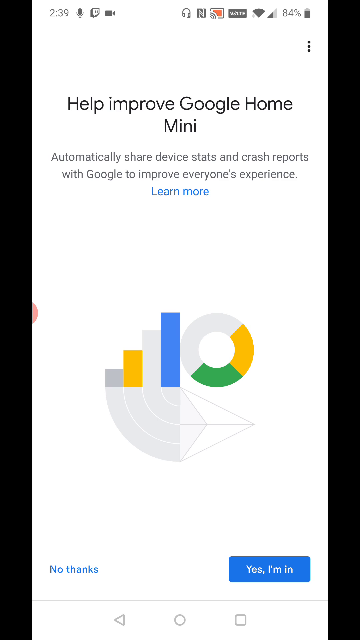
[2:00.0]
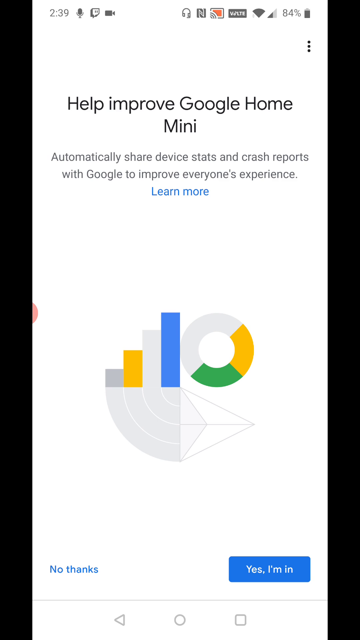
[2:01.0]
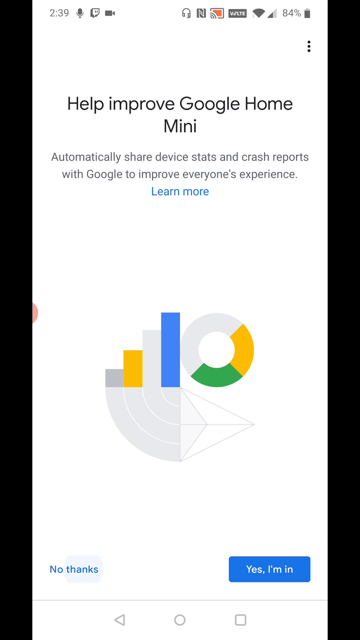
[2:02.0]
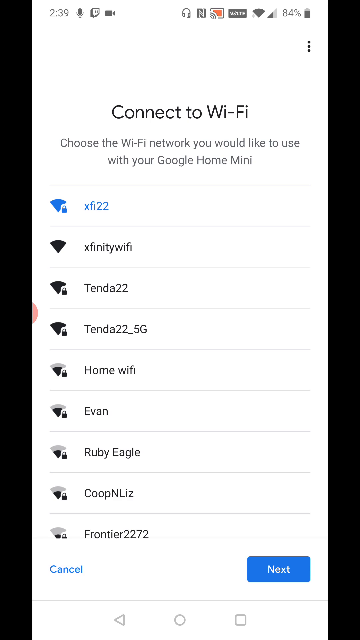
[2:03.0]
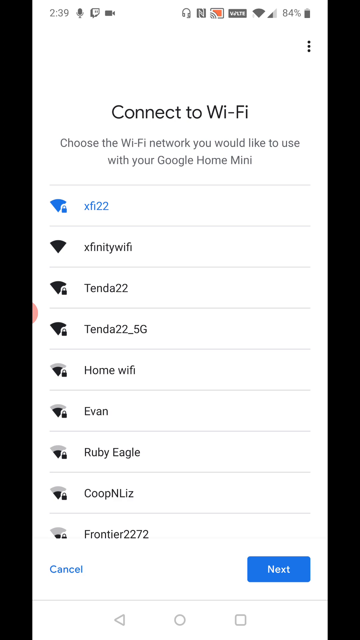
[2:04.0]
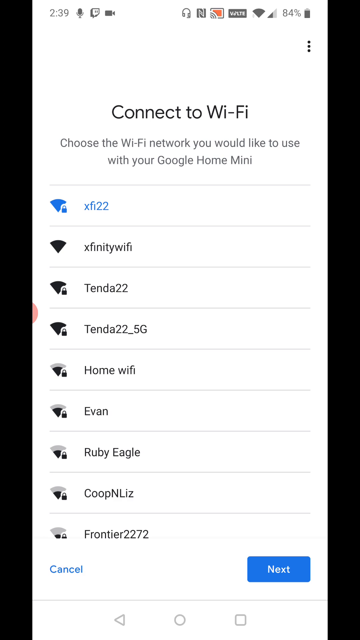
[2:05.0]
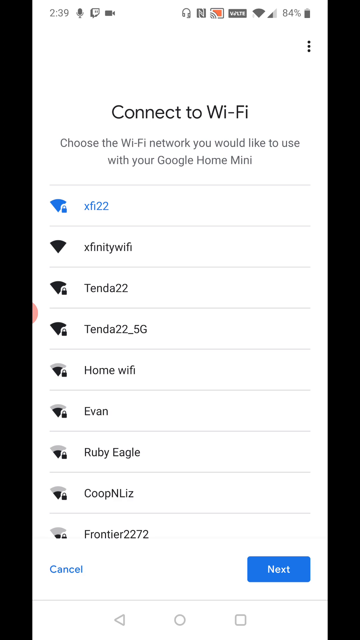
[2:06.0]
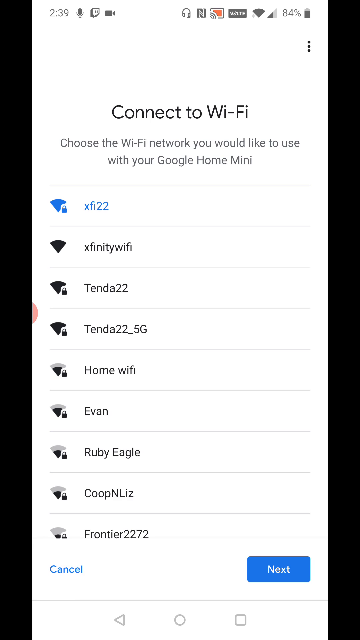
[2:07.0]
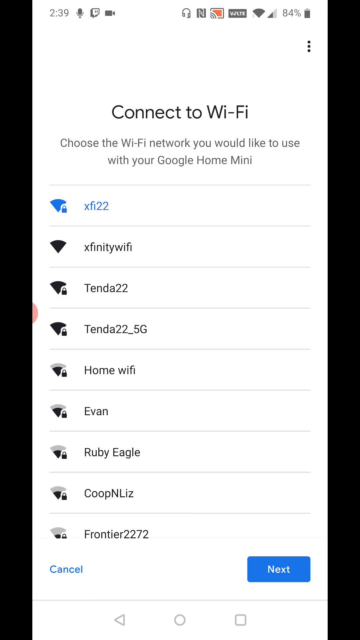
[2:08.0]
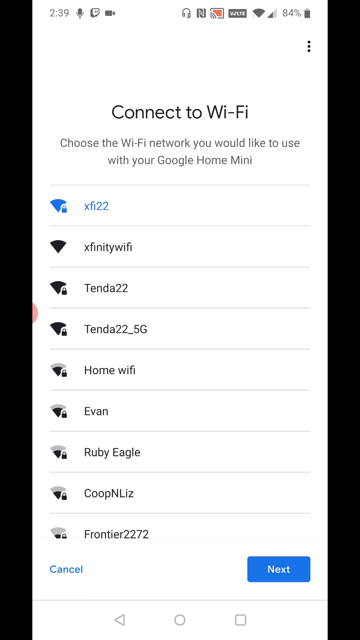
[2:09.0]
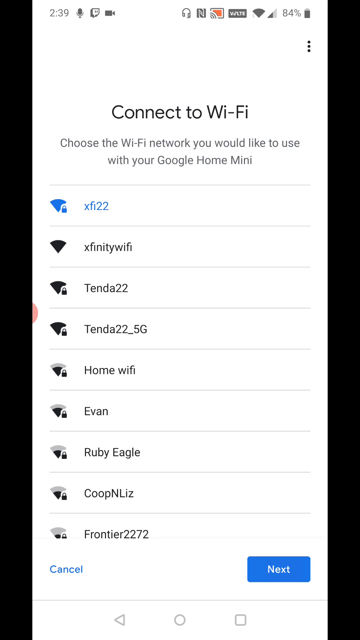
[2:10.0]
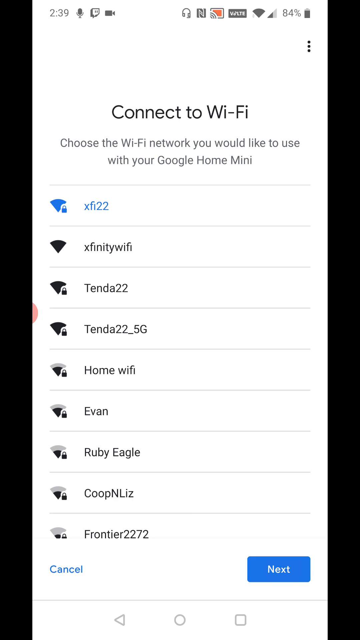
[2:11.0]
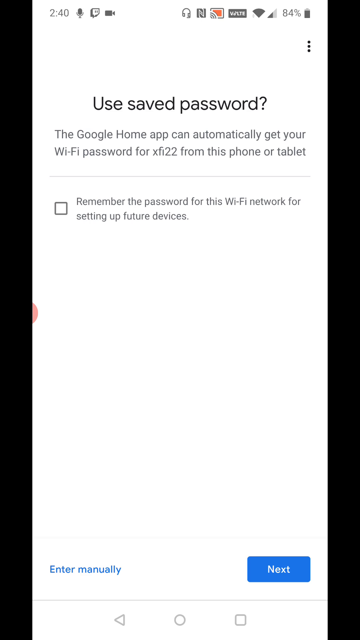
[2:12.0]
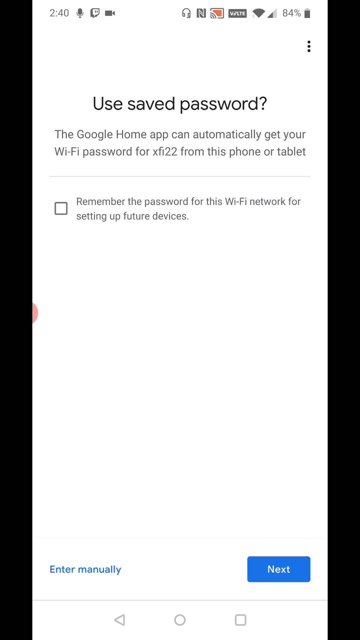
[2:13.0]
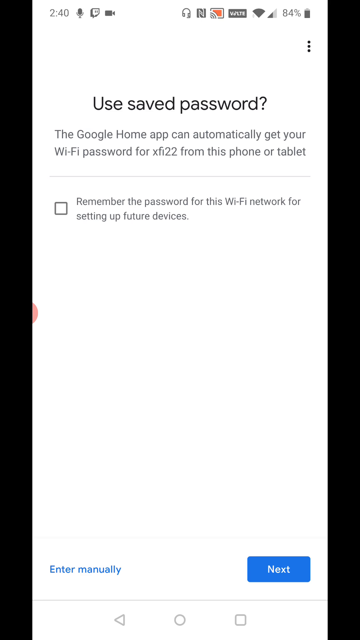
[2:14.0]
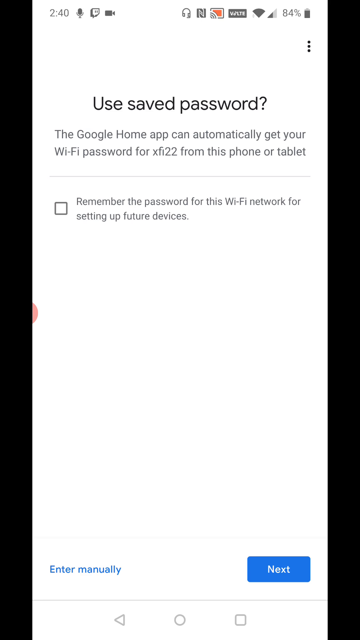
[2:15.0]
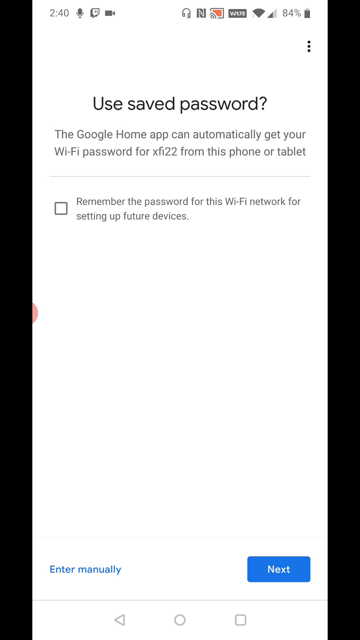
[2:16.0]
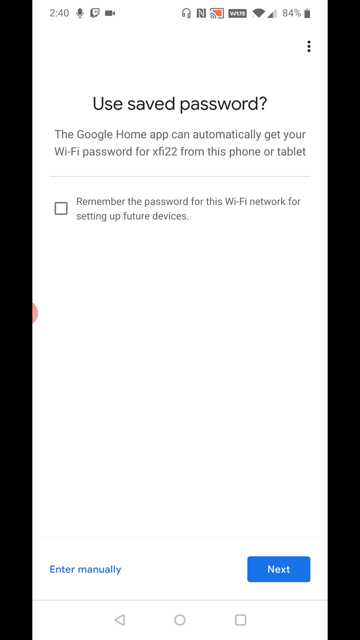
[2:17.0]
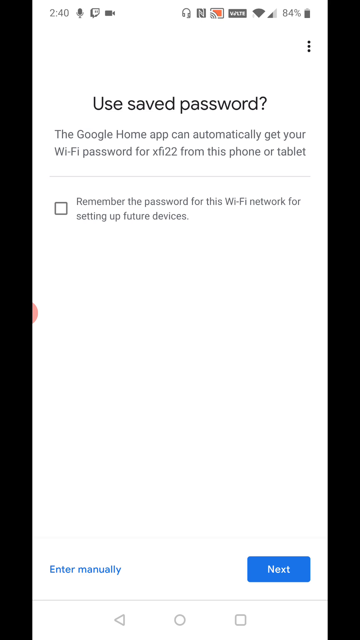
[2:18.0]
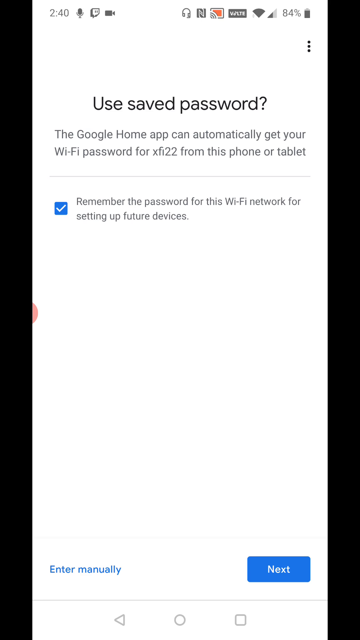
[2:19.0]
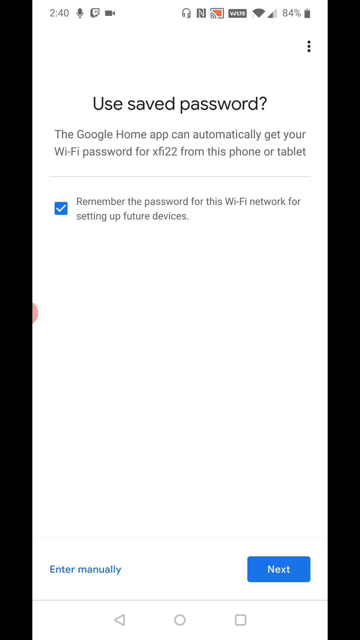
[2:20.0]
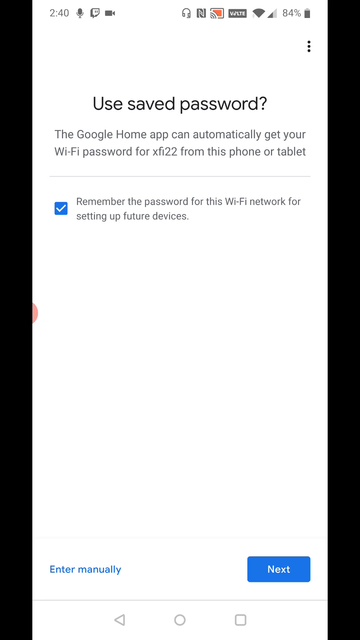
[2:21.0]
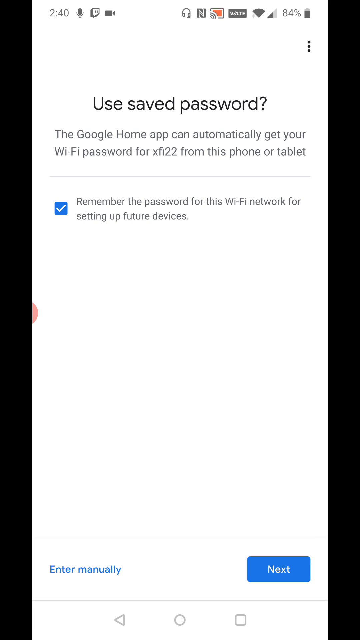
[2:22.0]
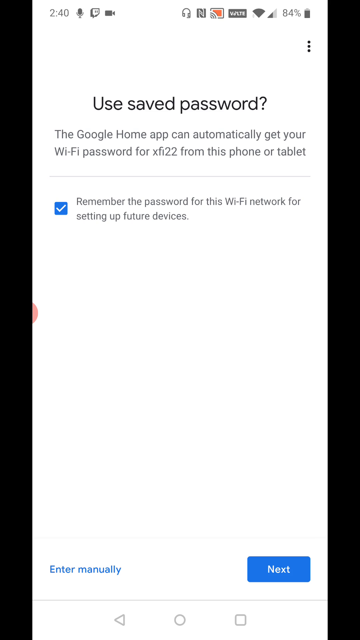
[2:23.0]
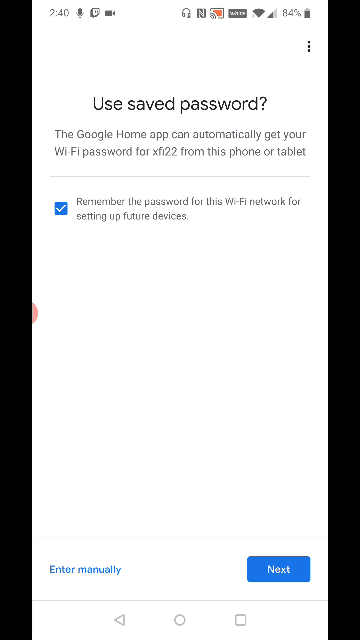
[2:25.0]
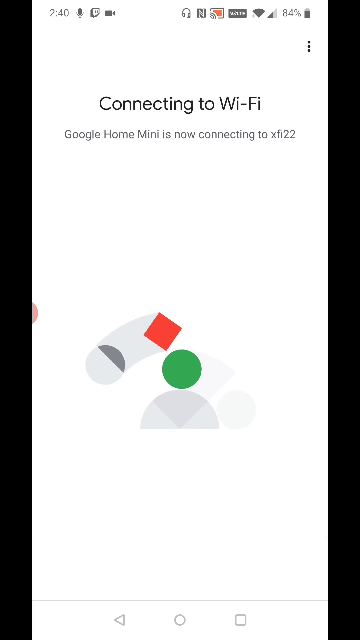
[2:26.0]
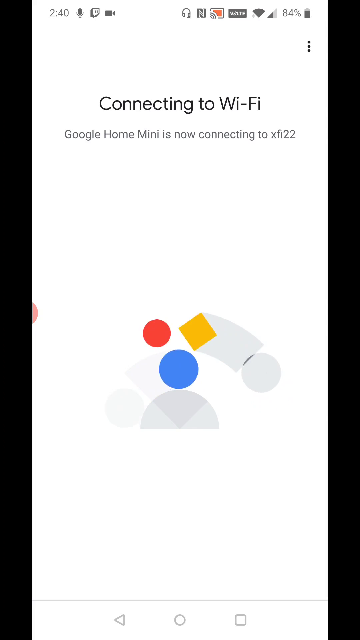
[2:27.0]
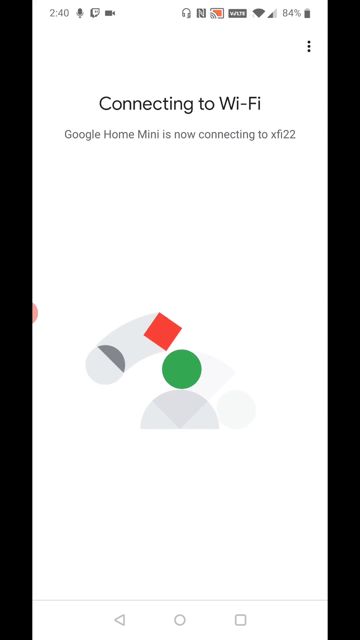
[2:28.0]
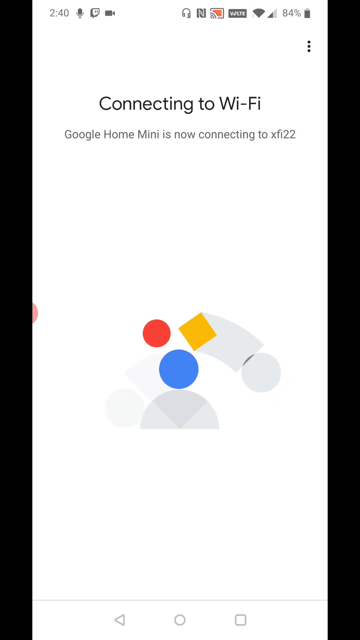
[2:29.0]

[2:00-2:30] The phone shows 84 percent battery. A screen says "Help improve Google Home Mini" with the text "automatically share device stats and crash reports". Next, a "Connect to Wi-Fi" screen reads "Choose the Wi-Fi network you would like to use with your Google Home Mini," and XFI-22 appears to be highlighted. A screen says "Use save password" and "the Google Home app can automatically get your Wi-Fi password for XFI22 from this phone or tablet." There is a box reading "remember this password for this Wi-Fi network for setting up future devices," and the person checks it. The screen then says "Connecting to Wi-Fi" and "Google Home Mini is now connecting to XFI22."